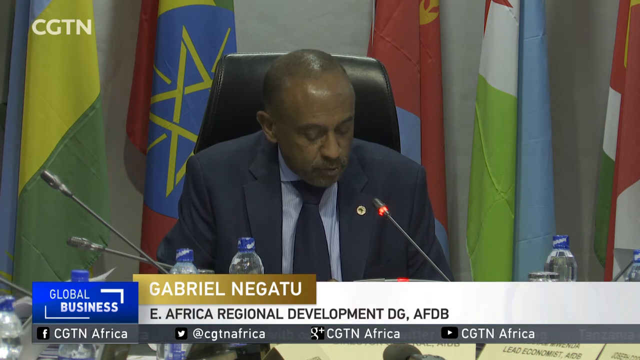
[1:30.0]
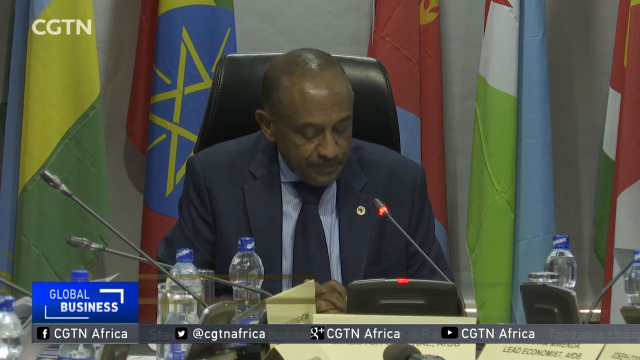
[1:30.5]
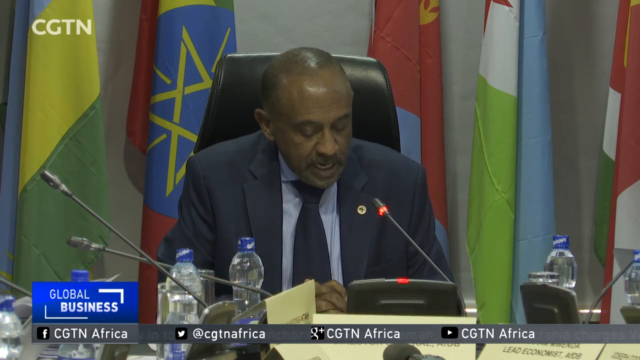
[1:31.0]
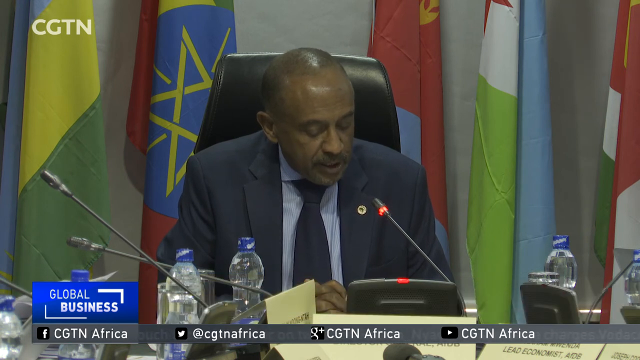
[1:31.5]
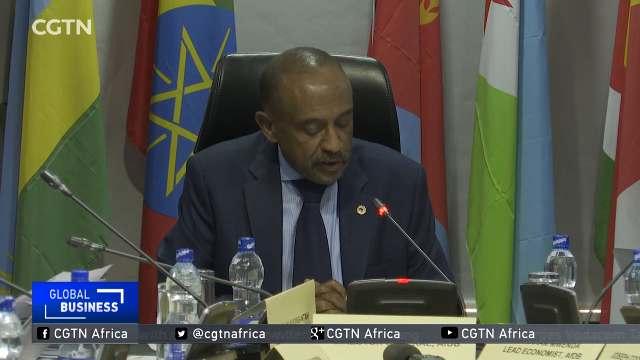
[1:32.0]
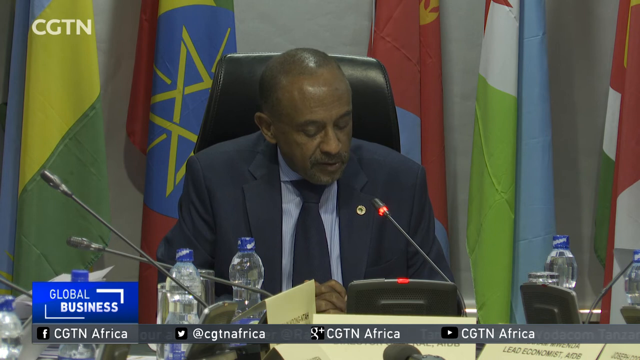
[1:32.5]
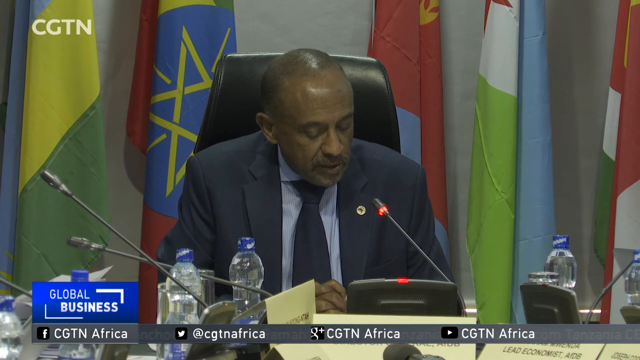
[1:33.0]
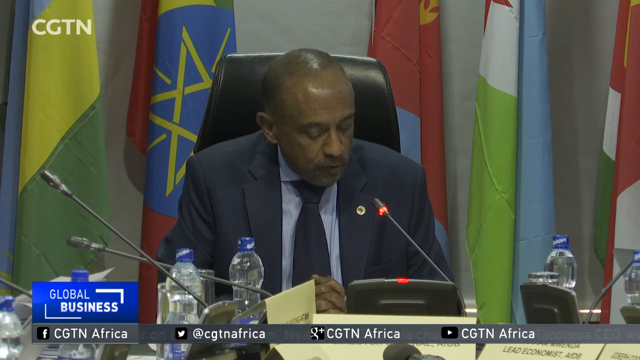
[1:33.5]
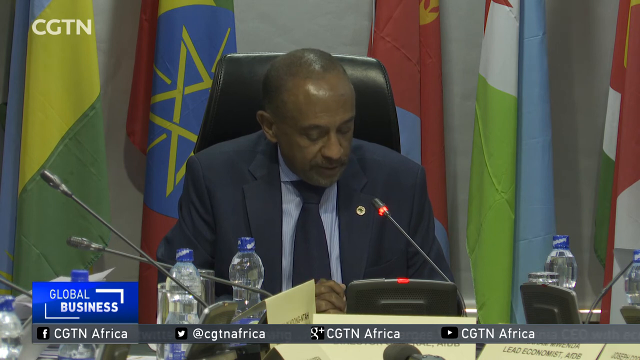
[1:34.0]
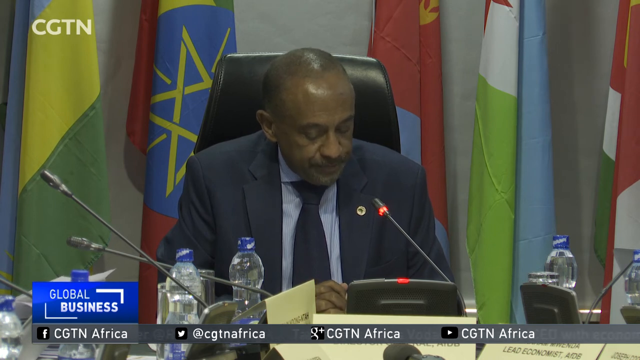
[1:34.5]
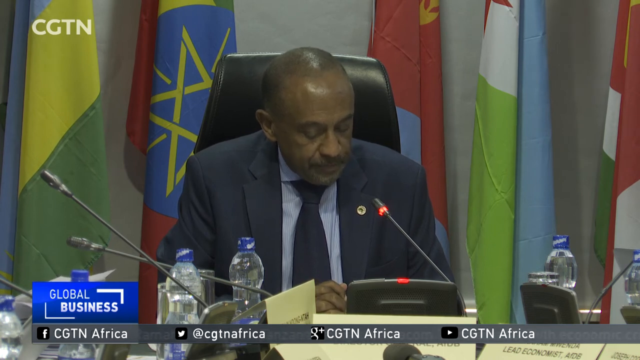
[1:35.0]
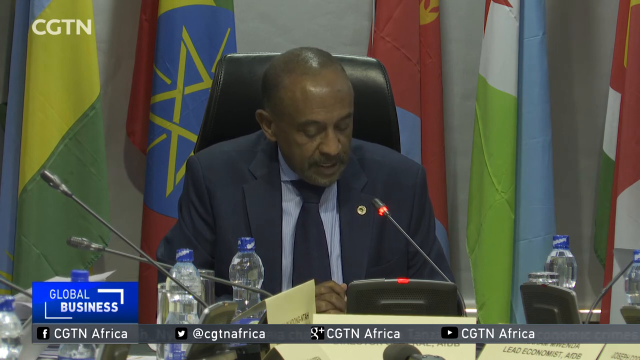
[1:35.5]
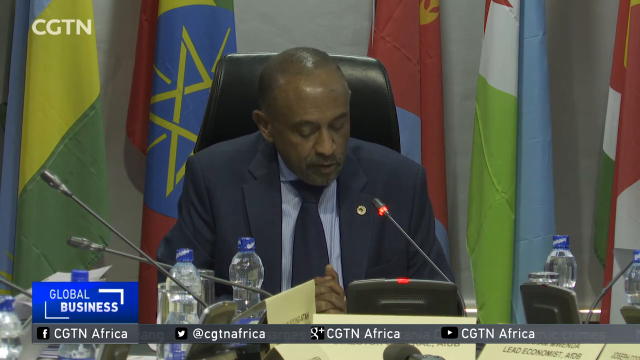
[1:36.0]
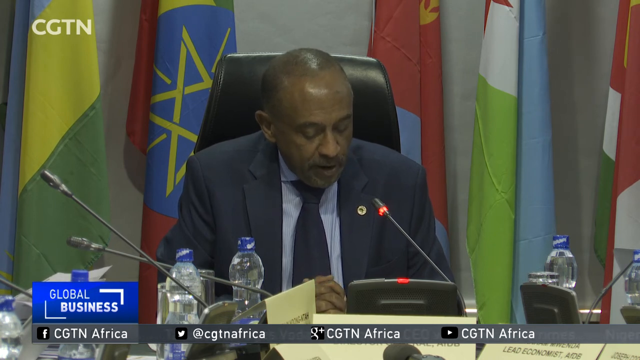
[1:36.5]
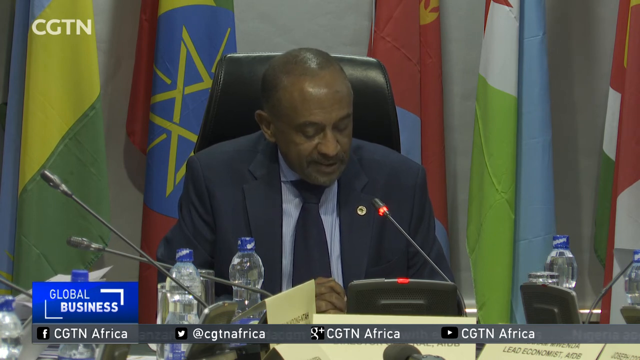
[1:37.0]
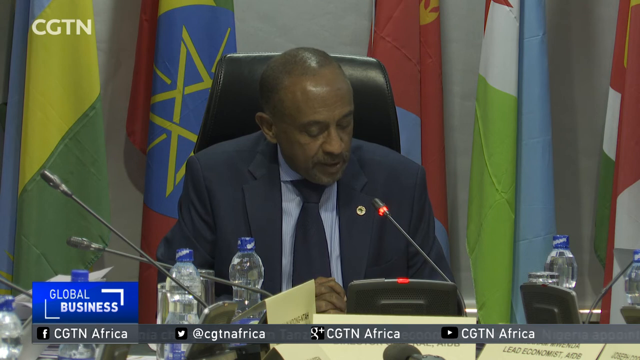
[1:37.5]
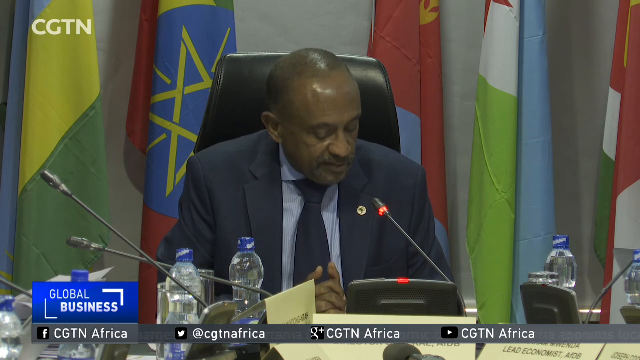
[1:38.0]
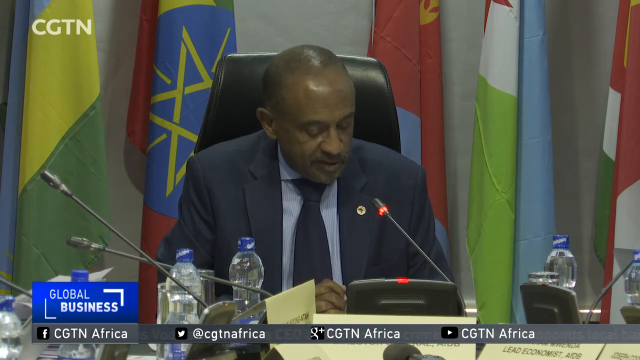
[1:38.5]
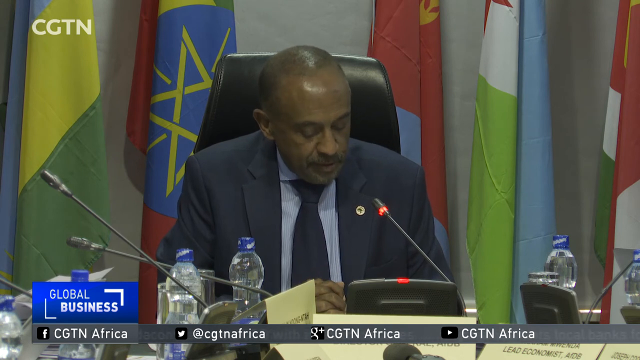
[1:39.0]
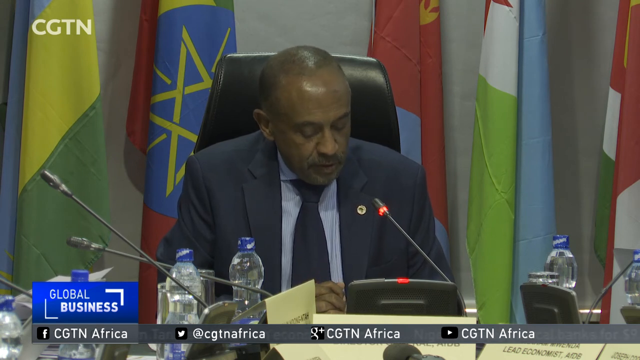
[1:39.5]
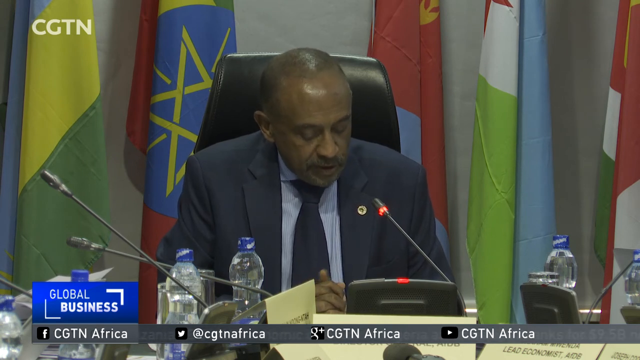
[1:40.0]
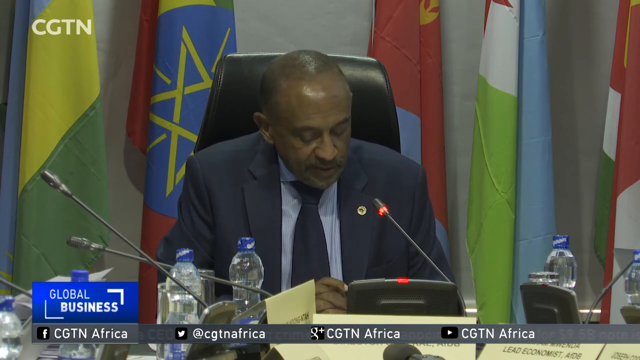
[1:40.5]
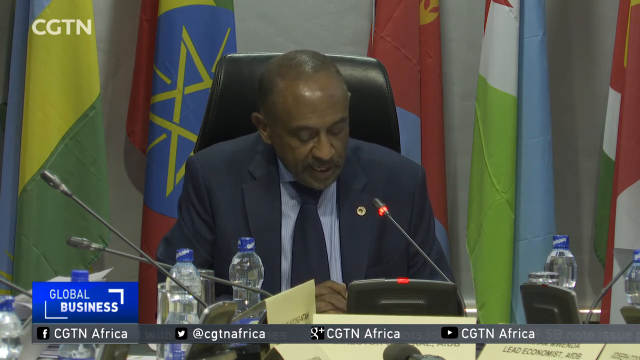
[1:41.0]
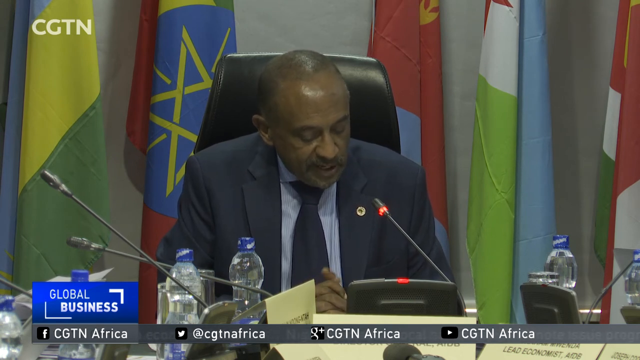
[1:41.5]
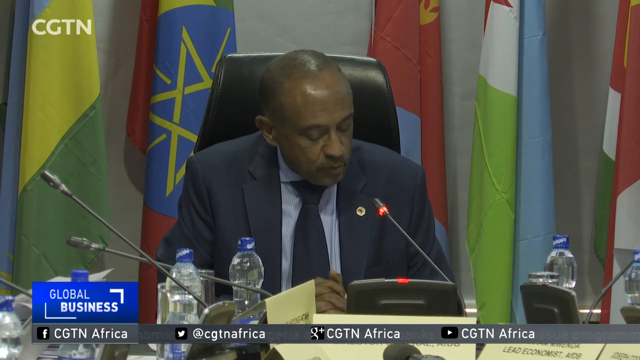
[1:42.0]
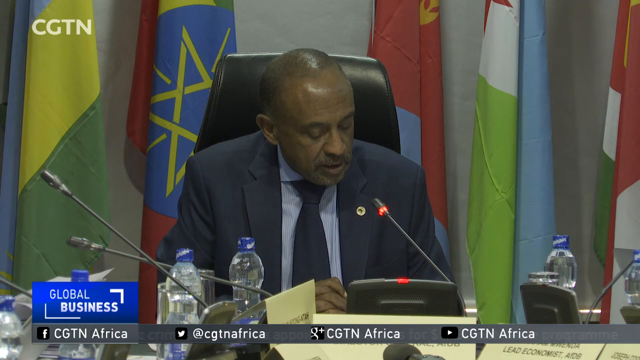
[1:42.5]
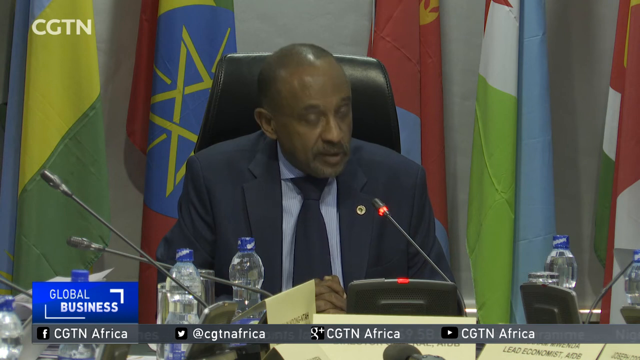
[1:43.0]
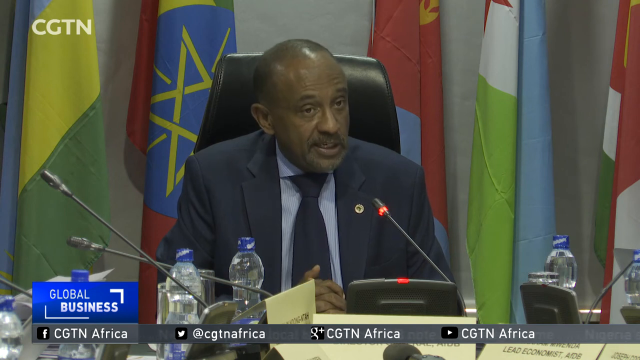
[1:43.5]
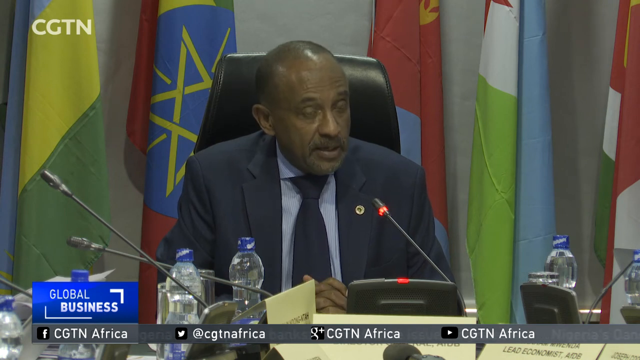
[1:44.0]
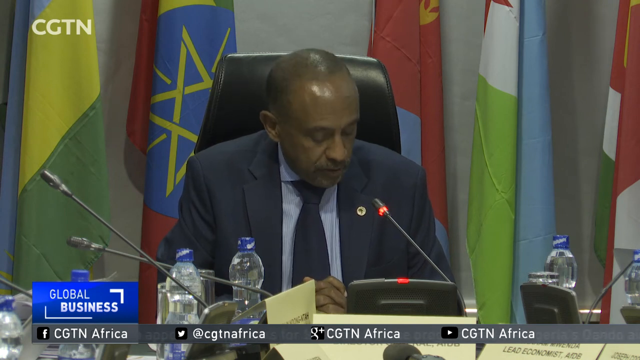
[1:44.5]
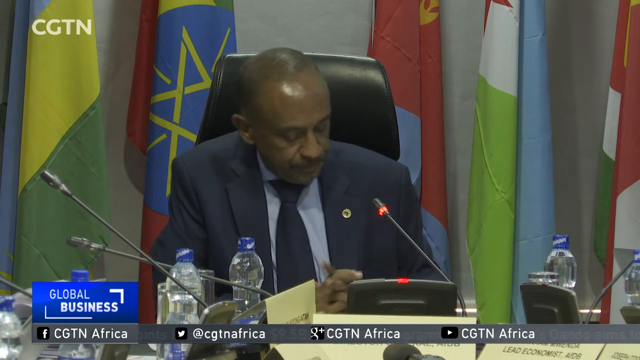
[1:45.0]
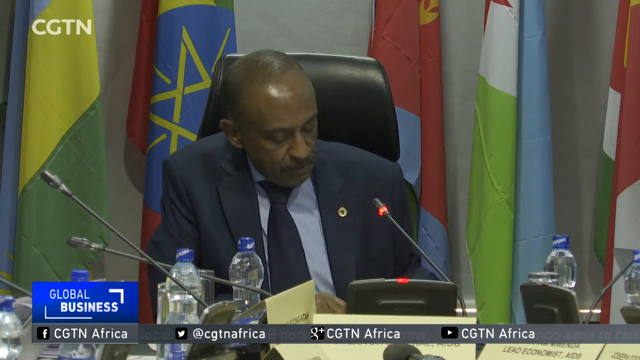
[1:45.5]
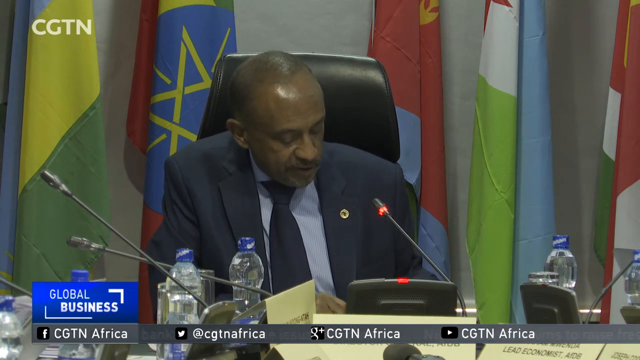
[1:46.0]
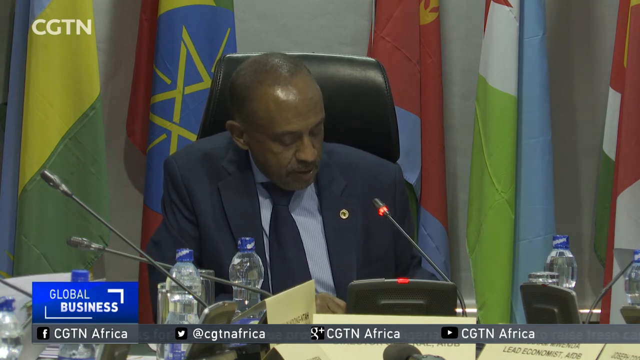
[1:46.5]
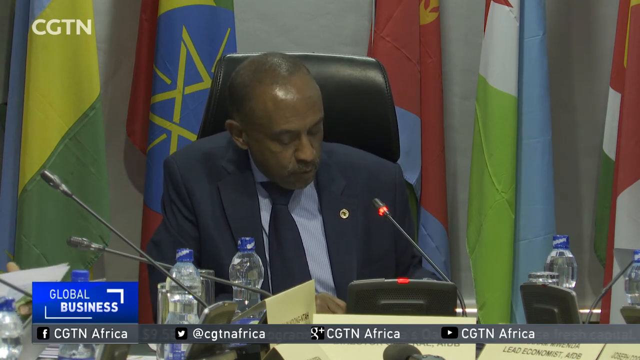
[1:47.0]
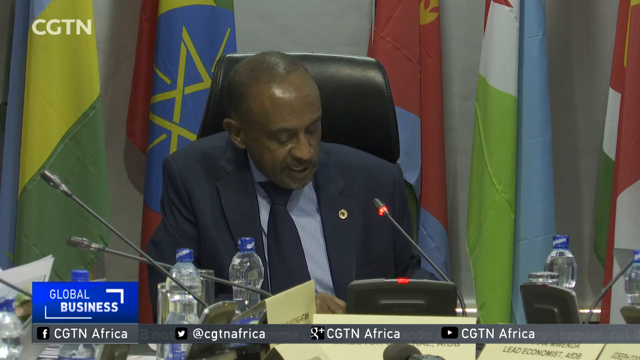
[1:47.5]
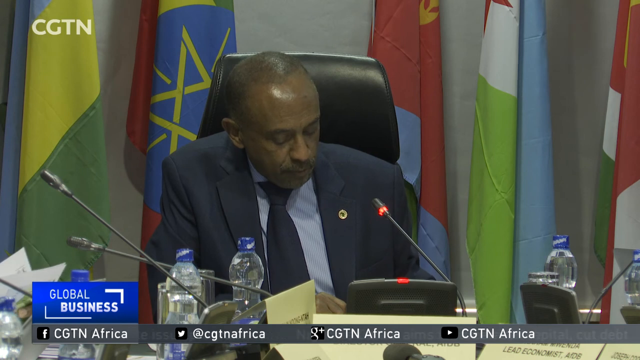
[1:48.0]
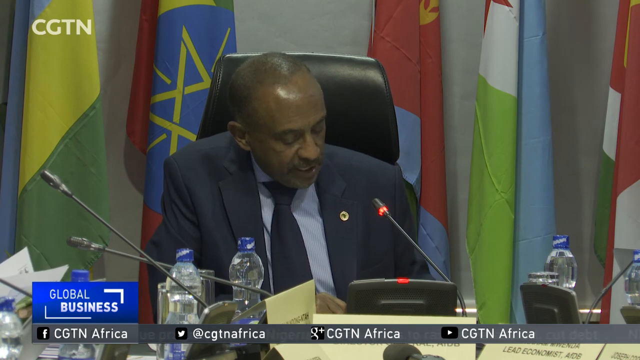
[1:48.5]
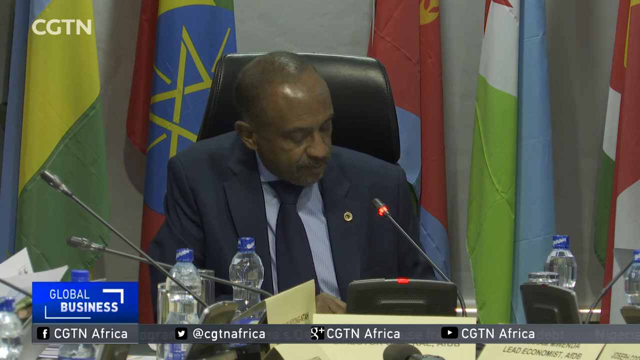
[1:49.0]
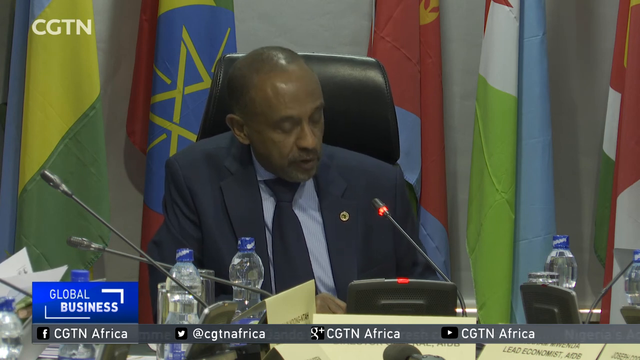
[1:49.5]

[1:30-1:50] Mr. Nagatu continues to speak, keeping quite still with few movements of his hands or head, looking down at the tablet and only very occasionally moving a hand slightly. He moves his thumb slightly, then his left hand moves down behind the desk, and papers are being ruffled at the very left of the screen. Most of the time he looks down; occasionally he looks up toward the camera with both eyes wide, as if acknowledging it. He appears to keep talking into the microphone, sometimes tapping his fingers on the desk, though his hands are mostly still. He looks up toward the camera and shifts position so his whole body moves to his right, then continues speaking, occasionally lifting his head.